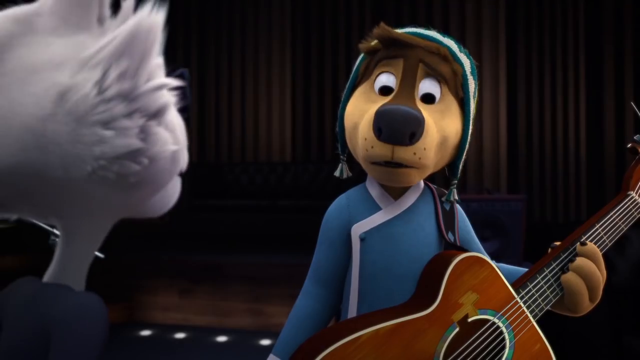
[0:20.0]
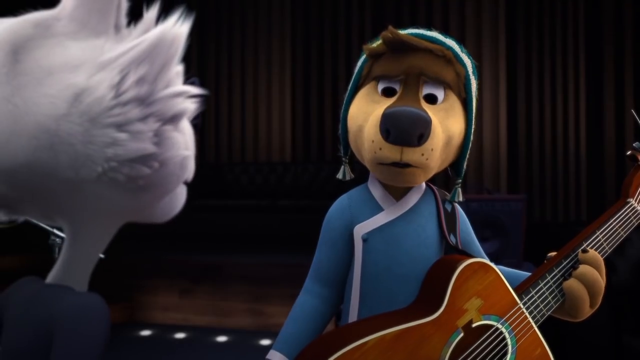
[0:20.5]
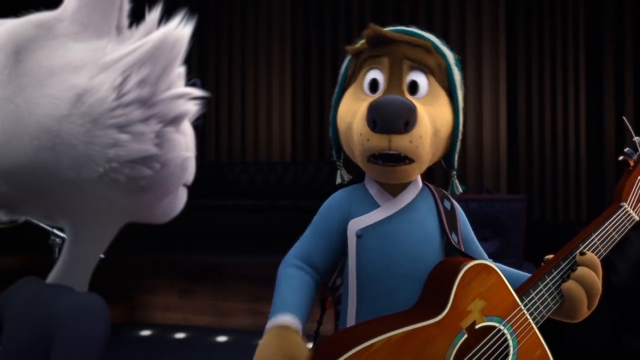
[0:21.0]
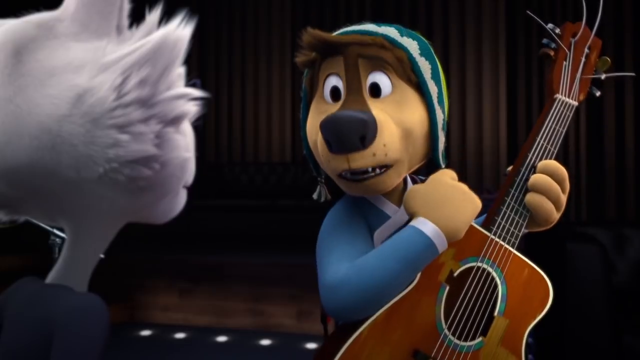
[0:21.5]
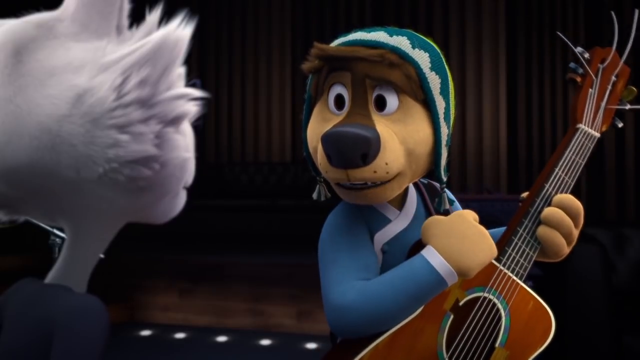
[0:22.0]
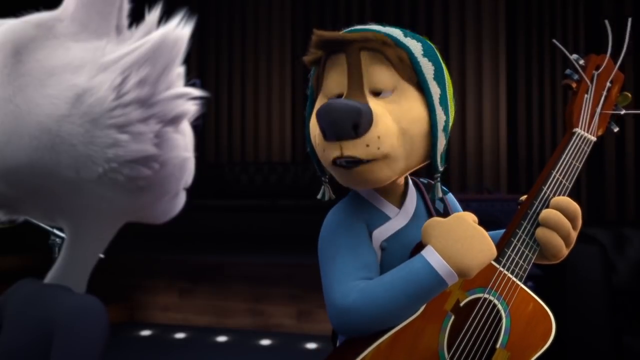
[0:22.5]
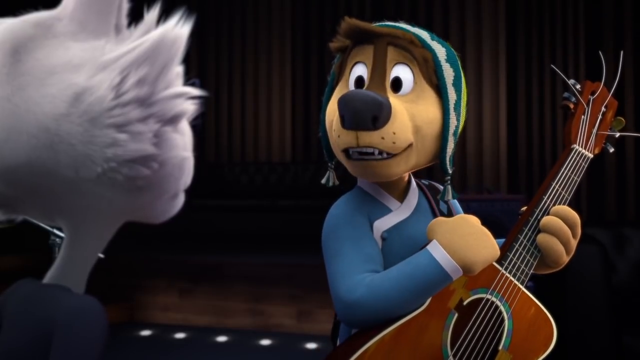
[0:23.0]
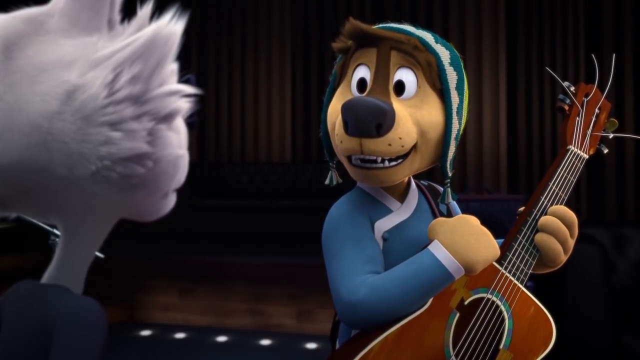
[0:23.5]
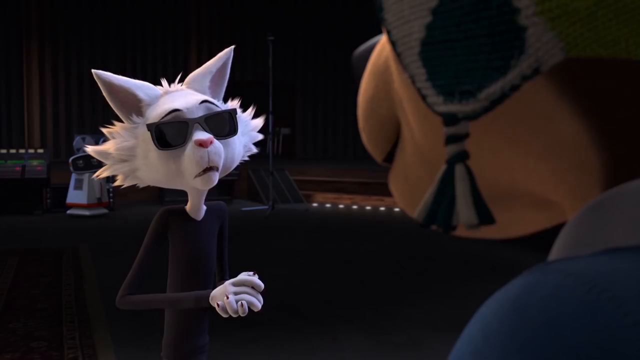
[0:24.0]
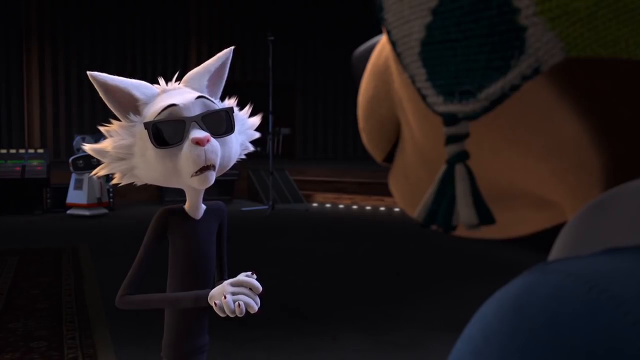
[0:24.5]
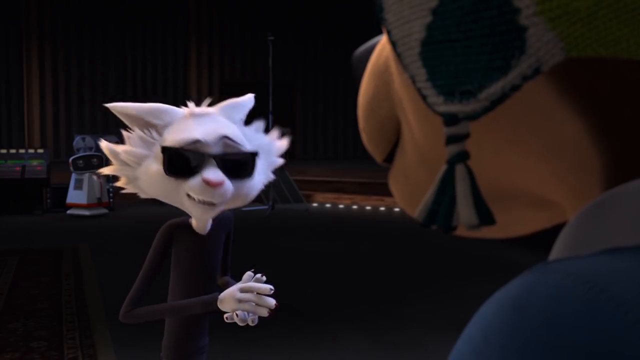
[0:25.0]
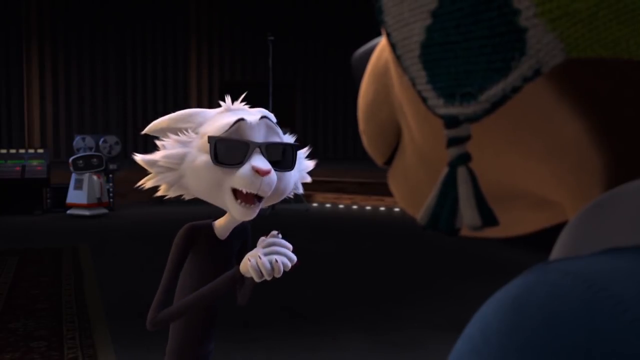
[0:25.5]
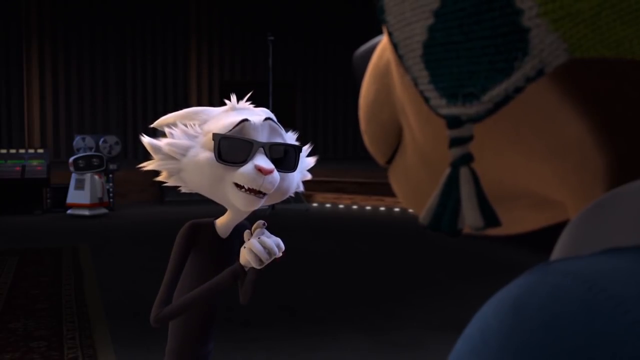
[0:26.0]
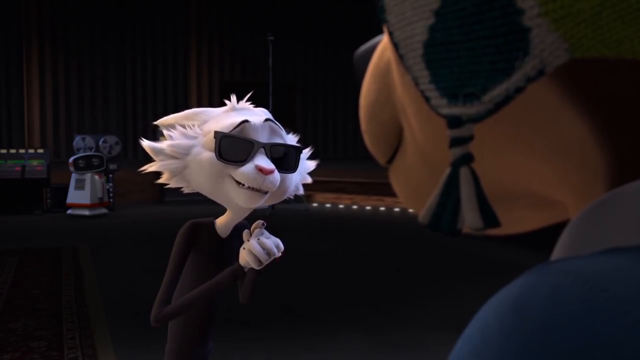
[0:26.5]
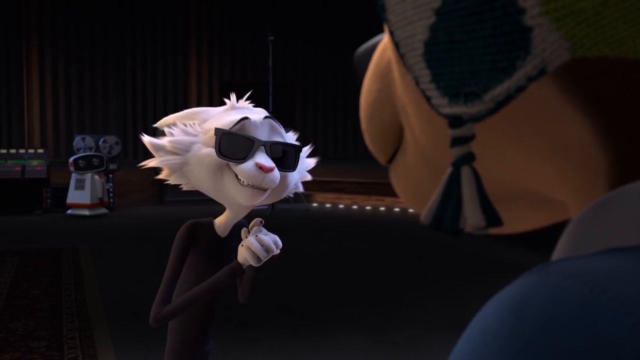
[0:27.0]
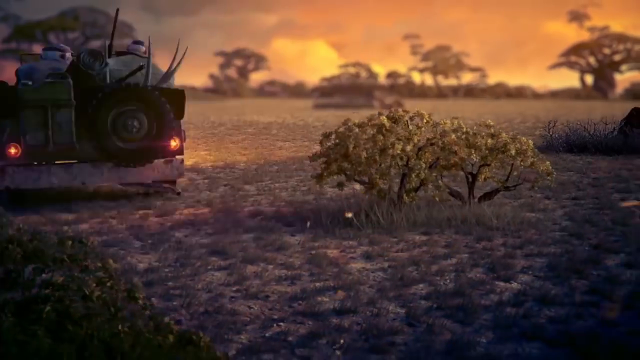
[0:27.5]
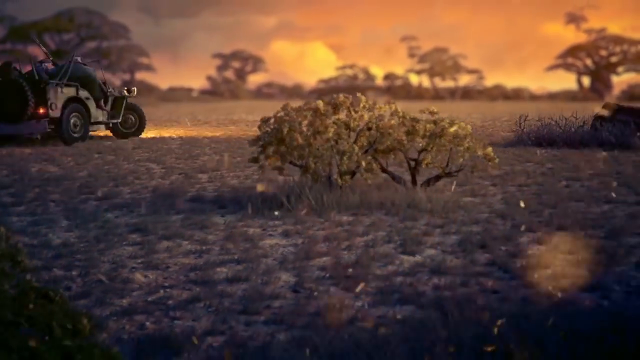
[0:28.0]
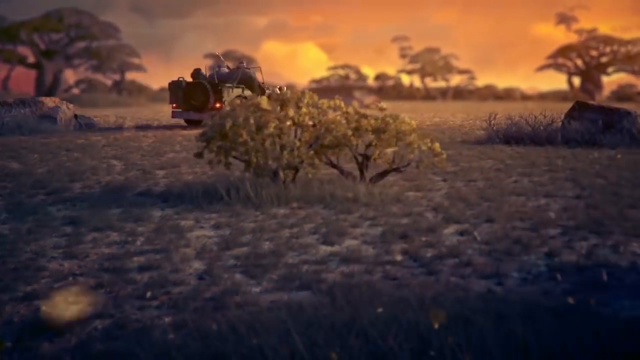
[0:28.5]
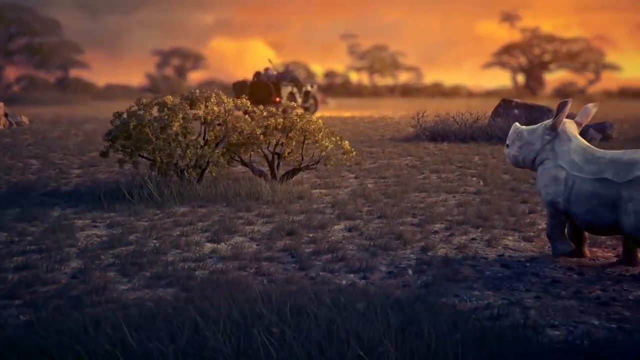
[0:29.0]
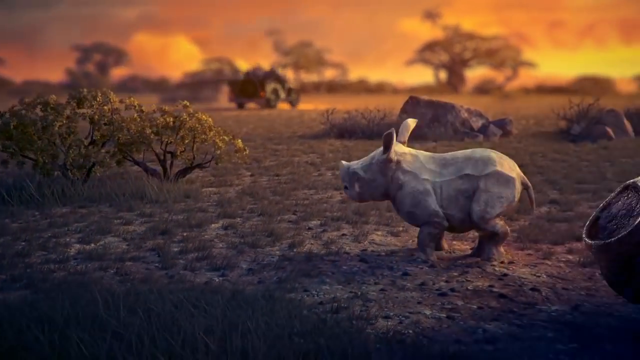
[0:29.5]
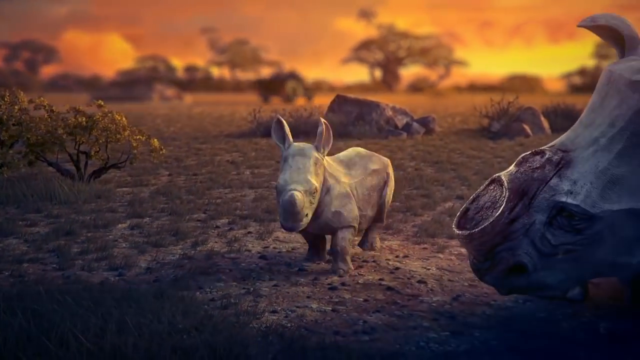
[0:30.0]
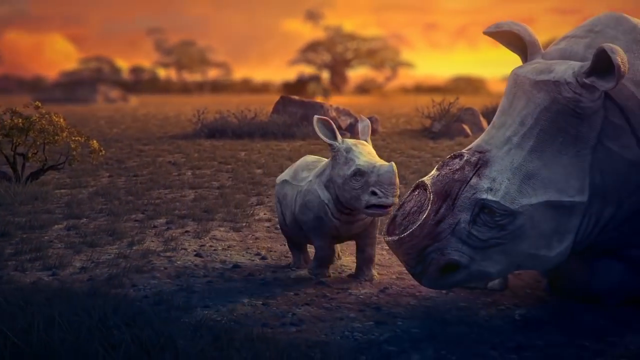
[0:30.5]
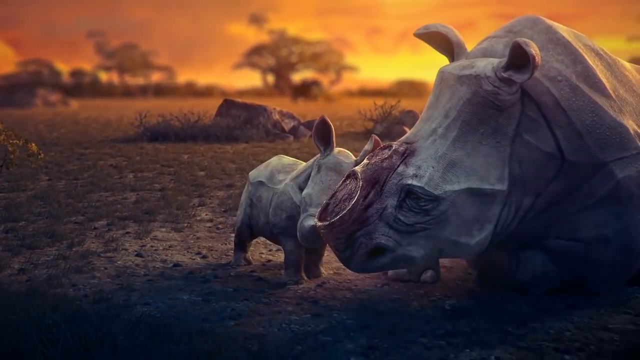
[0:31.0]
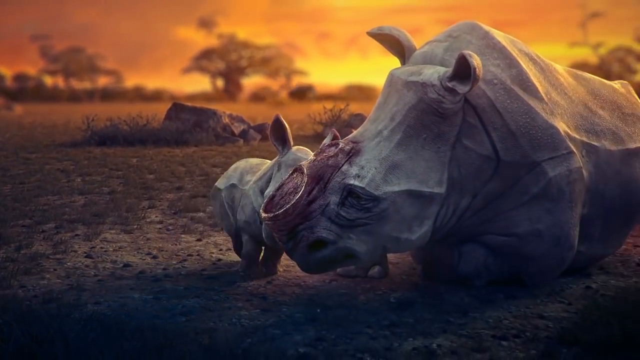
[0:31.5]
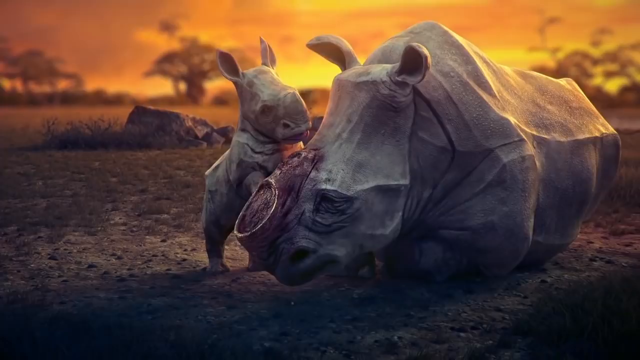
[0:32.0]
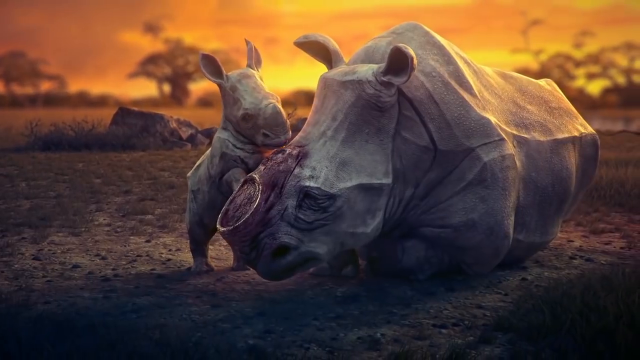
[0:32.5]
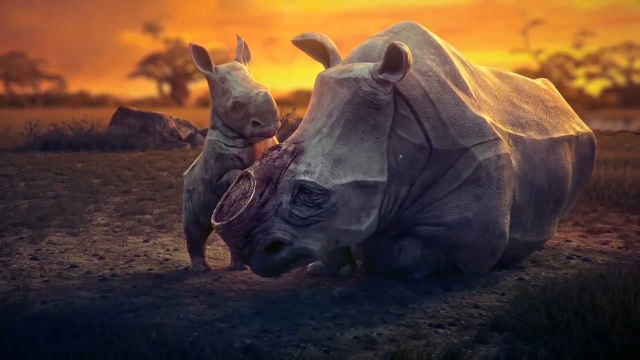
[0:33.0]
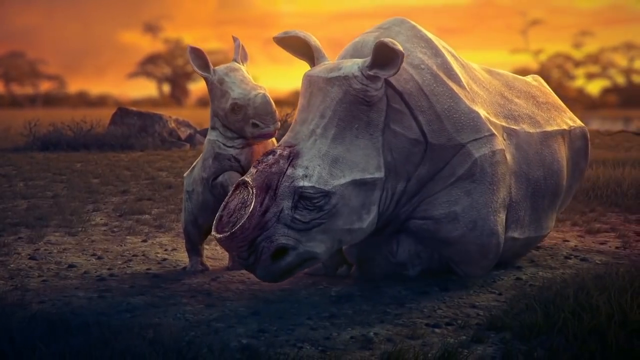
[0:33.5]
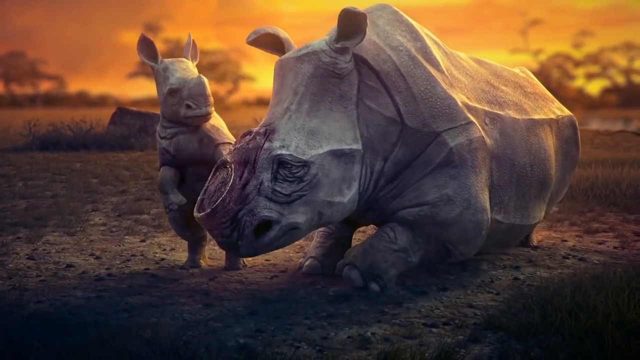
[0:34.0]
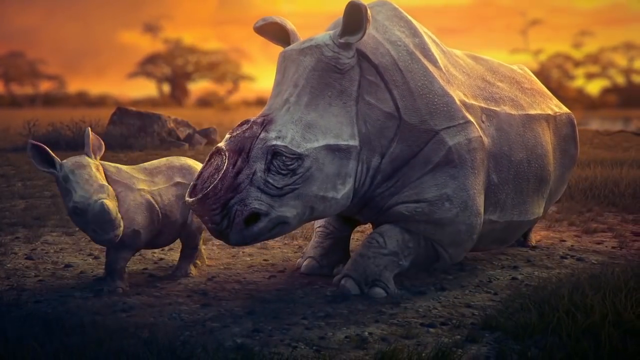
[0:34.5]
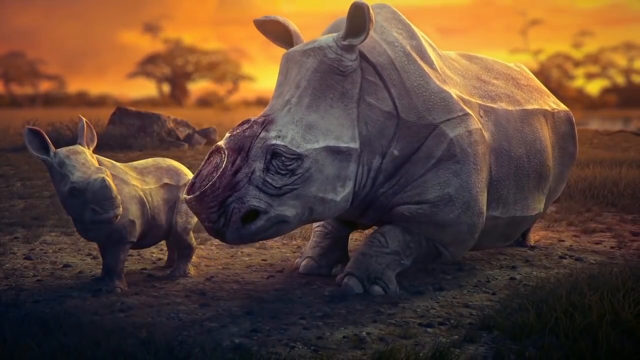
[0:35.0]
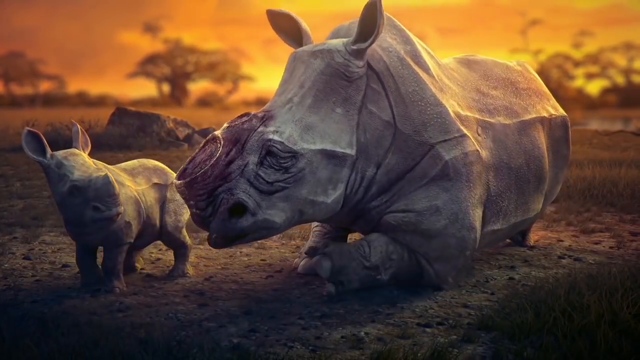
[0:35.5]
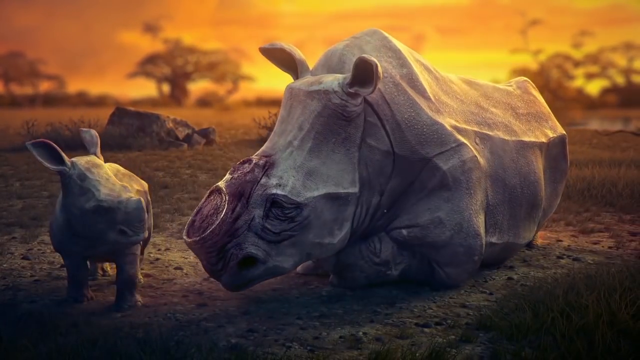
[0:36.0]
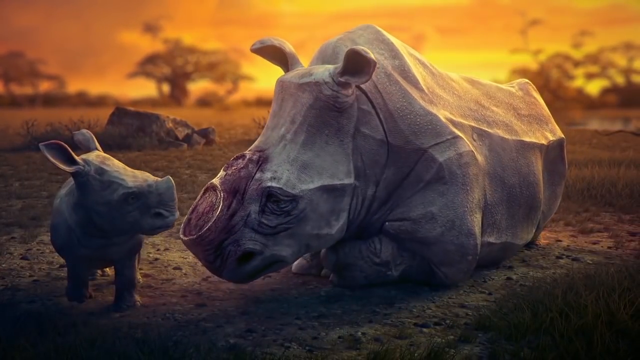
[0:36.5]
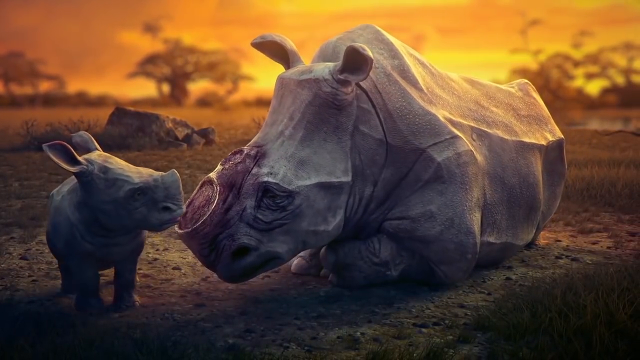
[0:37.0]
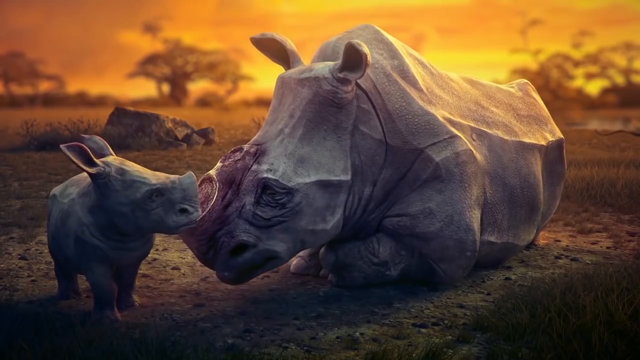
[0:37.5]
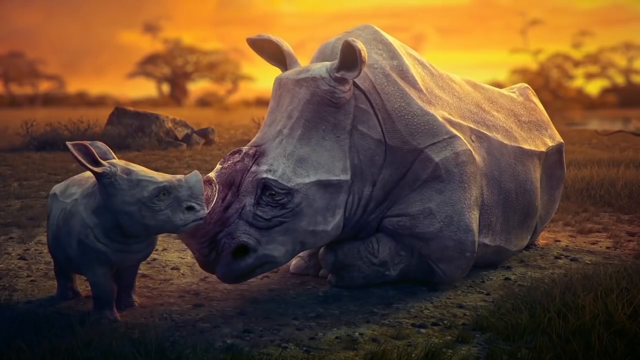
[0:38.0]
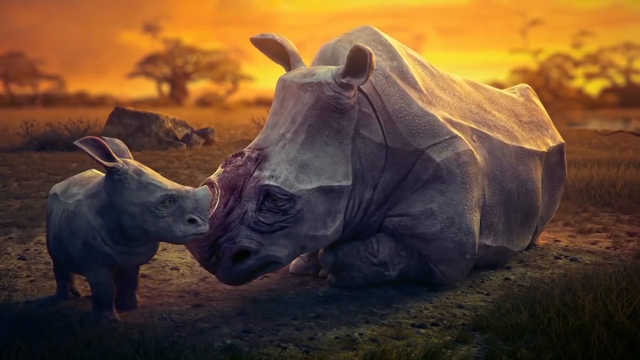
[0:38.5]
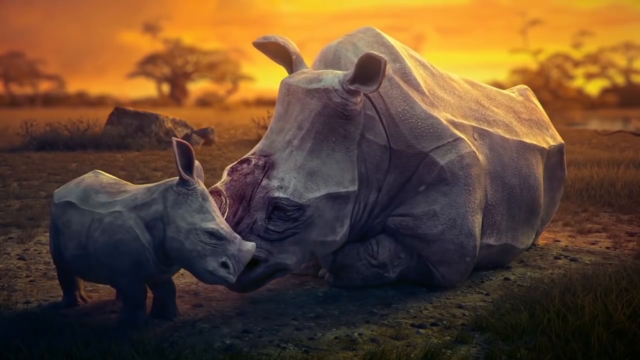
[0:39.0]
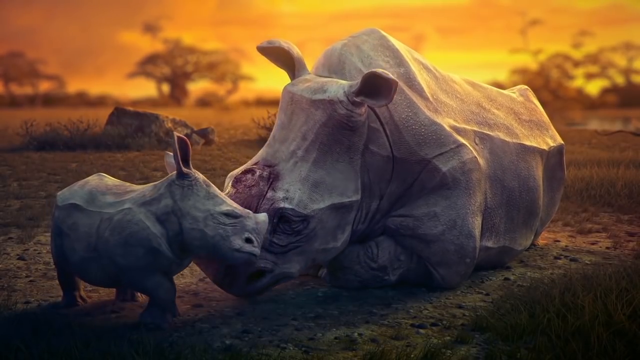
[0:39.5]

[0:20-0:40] The cat, on the left, talks to the dog, who looks pretty confused. As the cat lays out who is boss, the dog gets very excited. The scene suddenly changes to the African bush, where a mother rhinoceros has had her horn sliced off her face and blood is pouring out. She is left to die with her baby beside her as the people who cut off the horn drive off in their vehicle.